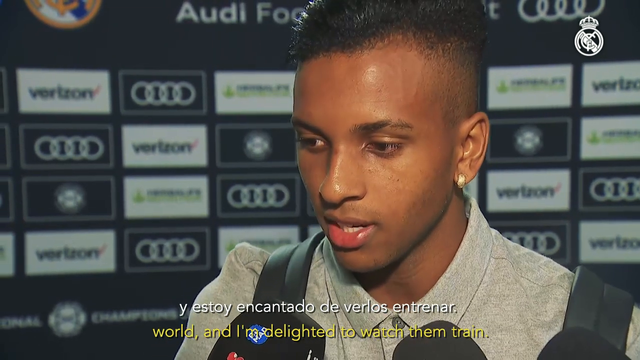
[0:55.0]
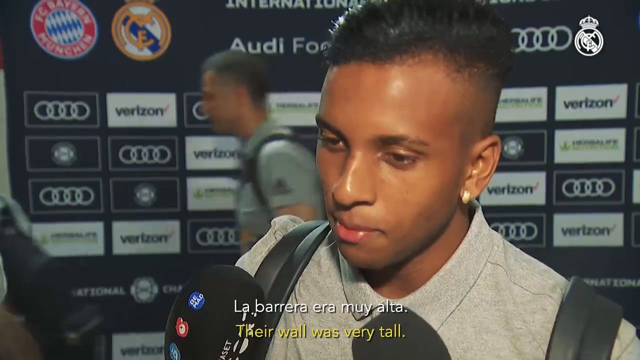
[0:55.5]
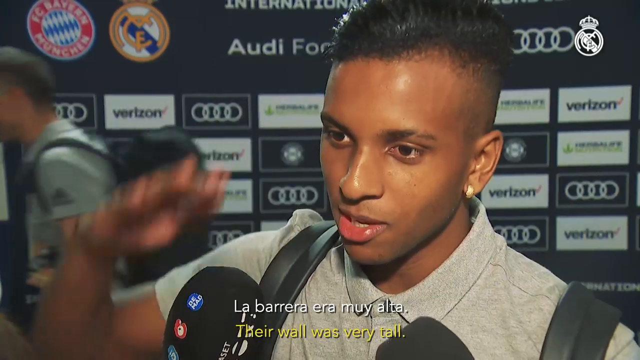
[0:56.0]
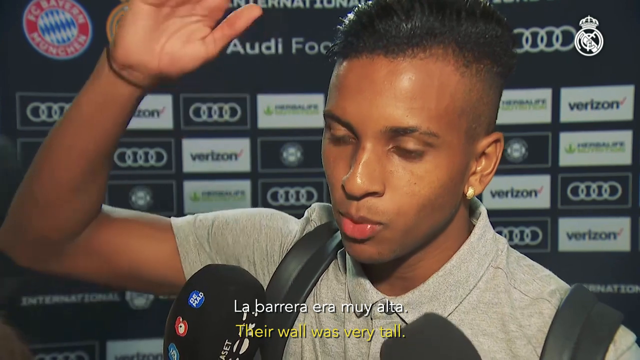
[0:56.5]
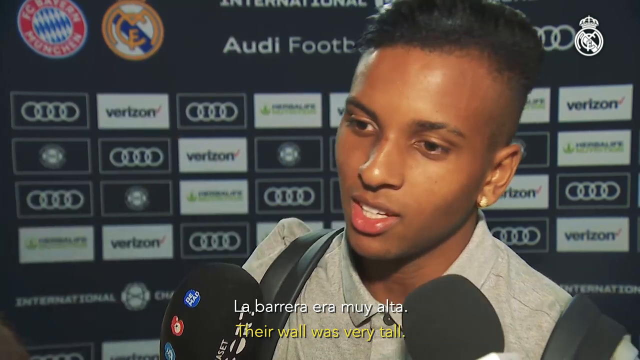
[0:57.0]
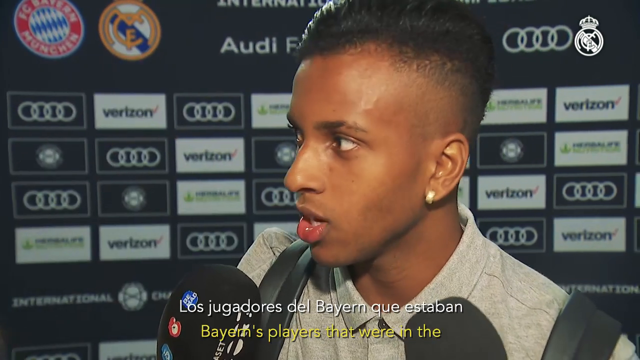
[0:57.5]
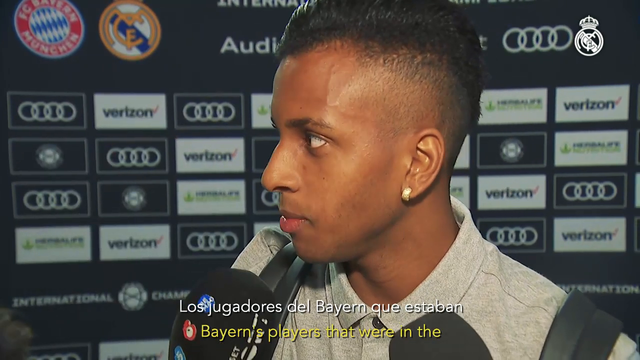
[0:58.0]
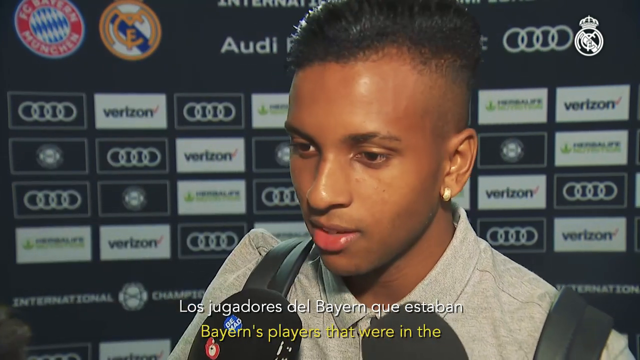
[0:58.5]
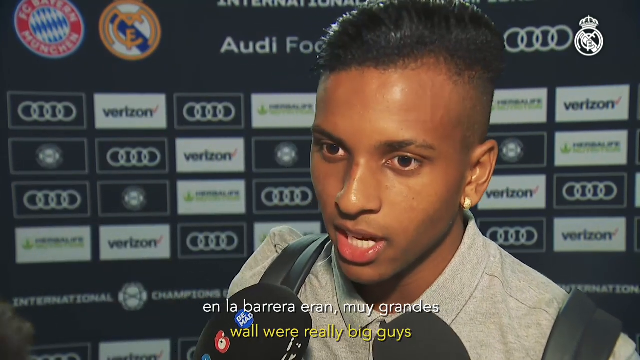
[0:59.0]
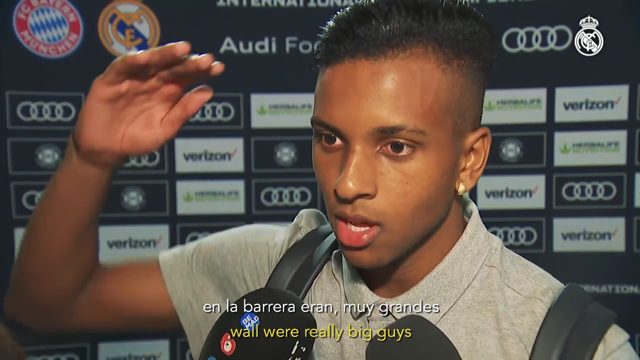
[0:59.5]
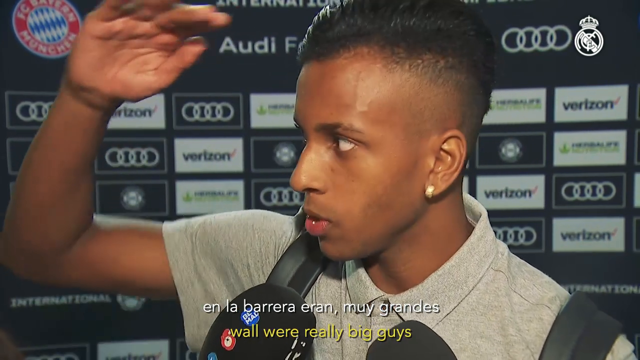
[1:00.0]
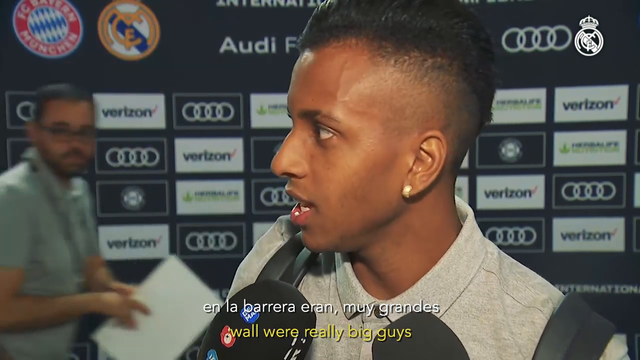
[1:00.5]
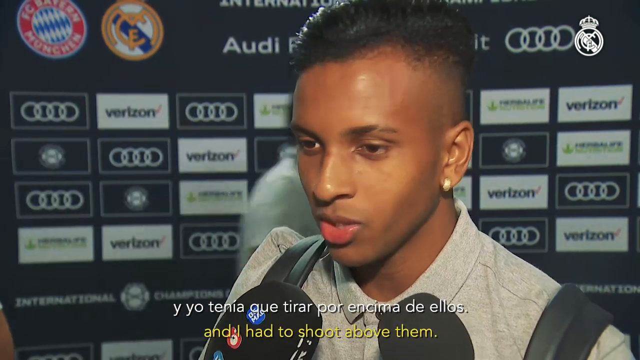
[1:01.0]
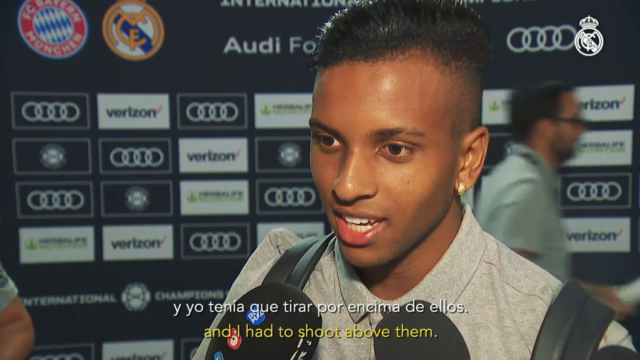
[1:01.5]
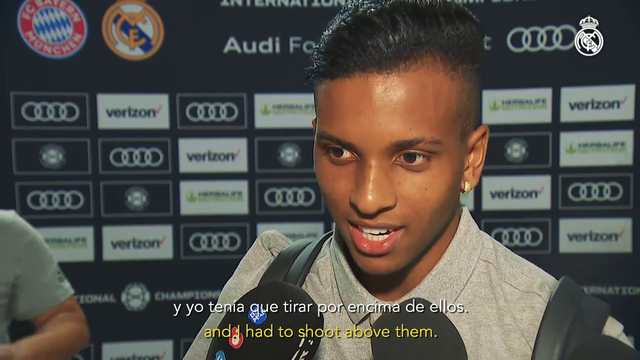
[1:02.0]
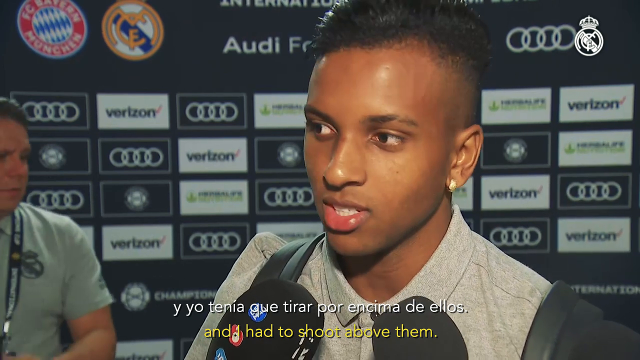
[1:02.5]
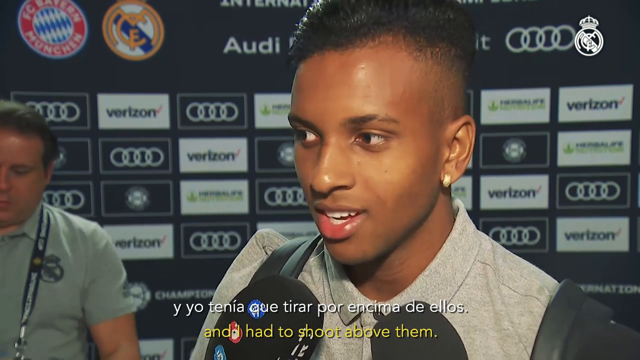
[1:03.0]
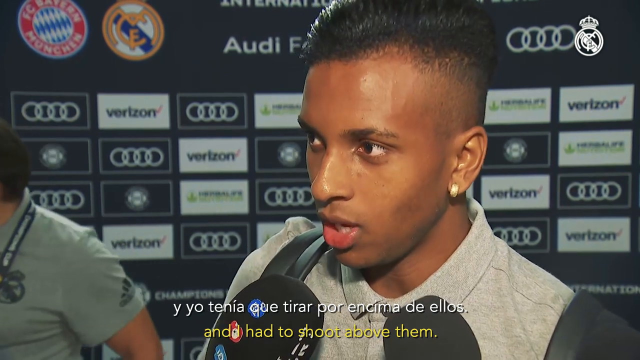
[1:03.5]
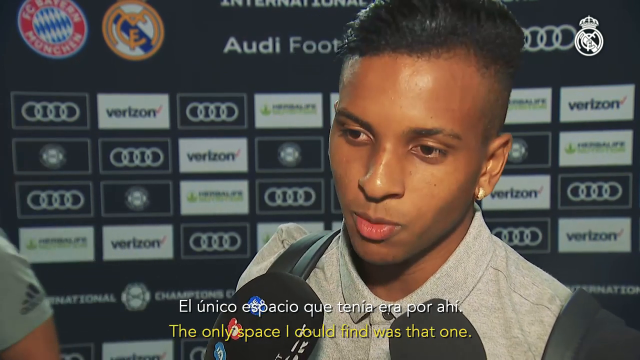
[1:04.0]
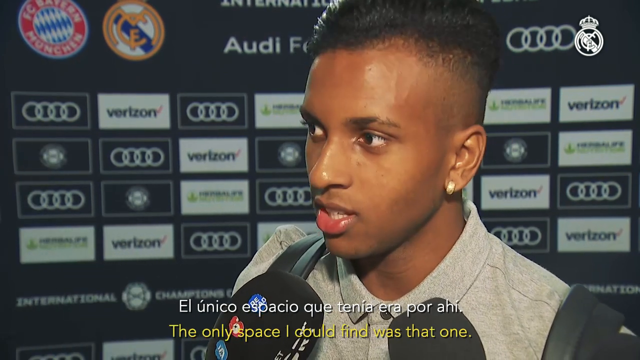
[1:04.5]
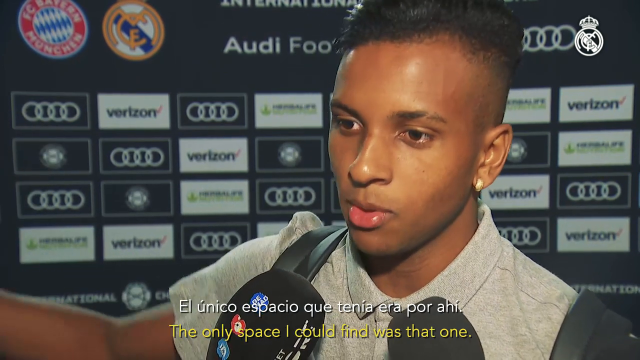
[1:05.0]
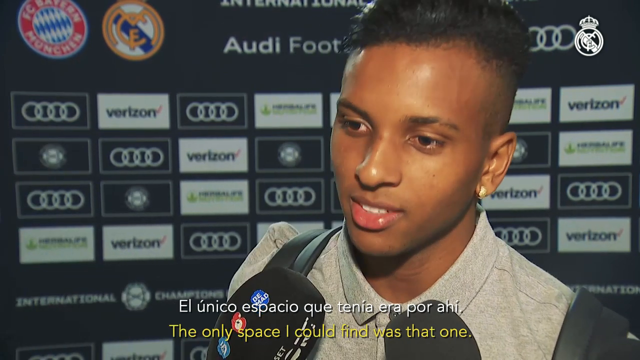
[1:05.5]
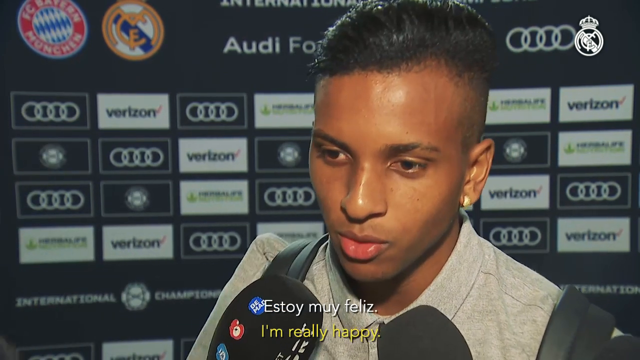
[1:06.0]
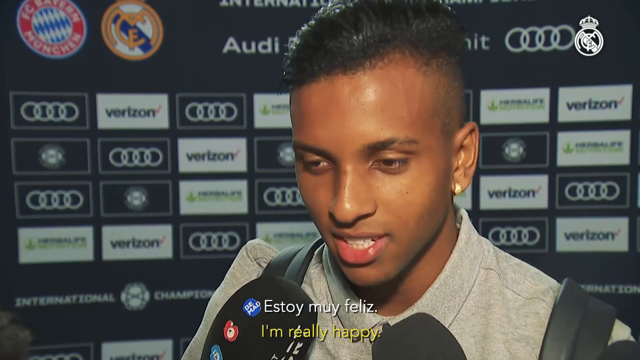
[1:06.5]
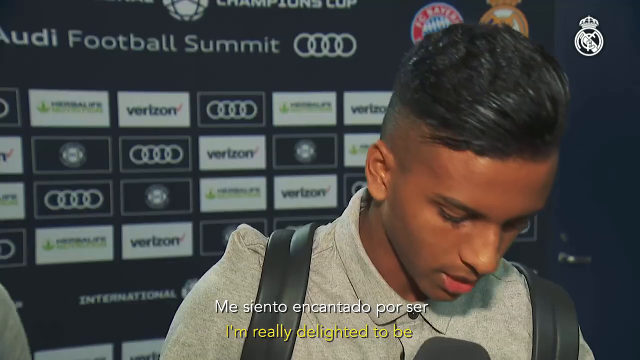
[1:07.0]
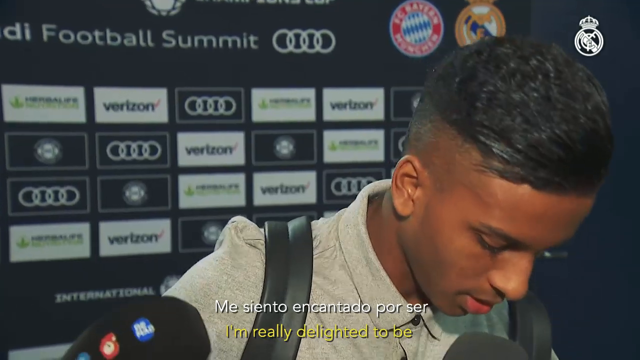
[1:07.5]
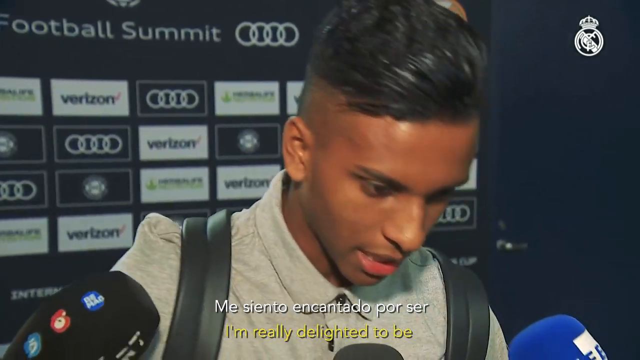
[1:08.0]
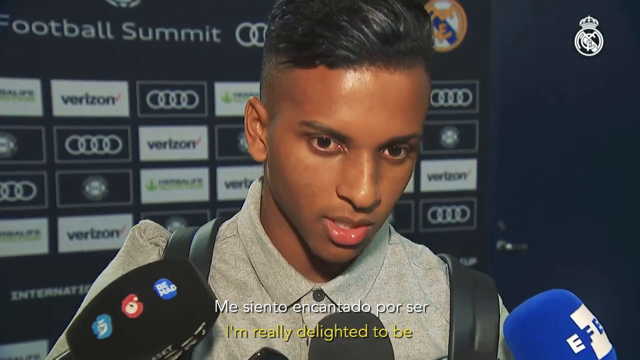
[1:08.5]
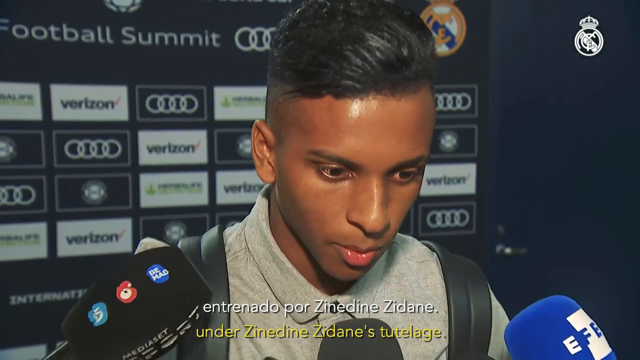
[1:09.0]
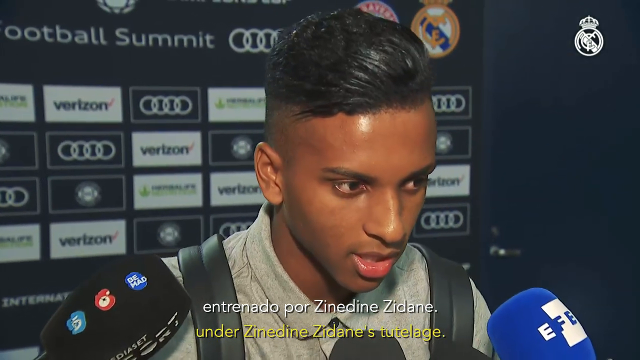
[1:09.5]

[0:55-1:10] The same man, Rodrygo, is being interviewed. The subtitles read "Bayern's players that were in the wall were really big guys and I had to shoot above them," and he appears very happy. He also says he is excited to be learning under Zinedine Zidane. Each cut to a new sound bite is marked by a flash of light.